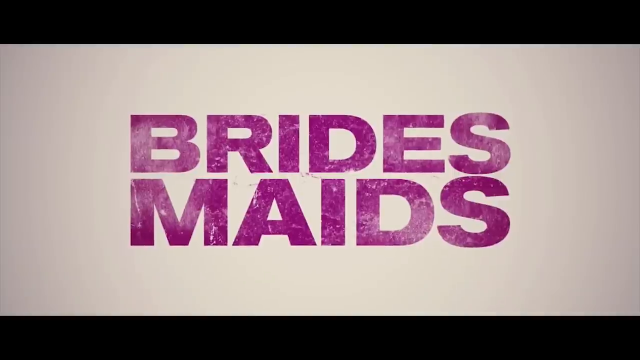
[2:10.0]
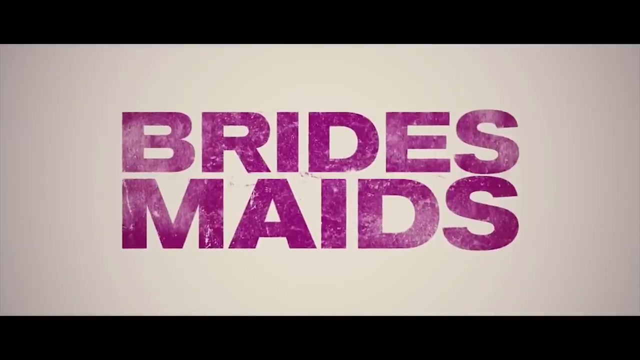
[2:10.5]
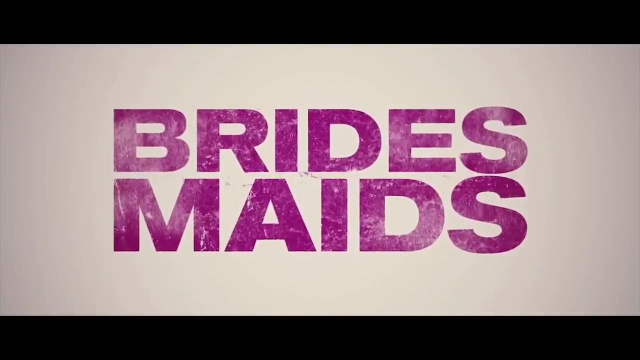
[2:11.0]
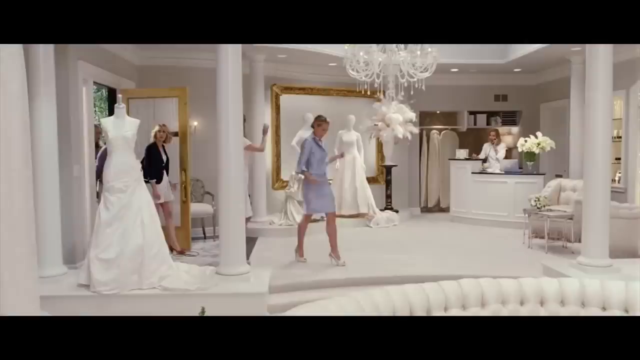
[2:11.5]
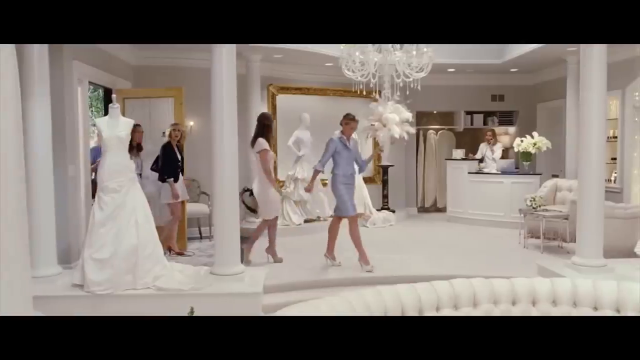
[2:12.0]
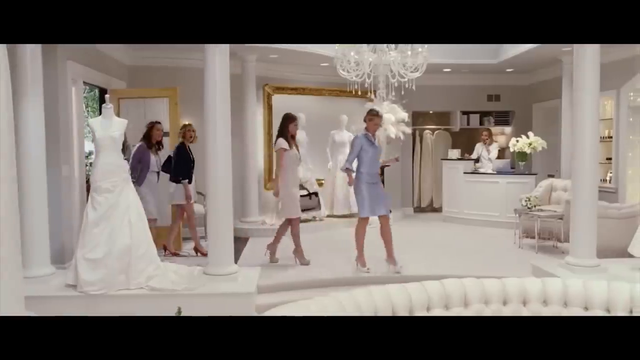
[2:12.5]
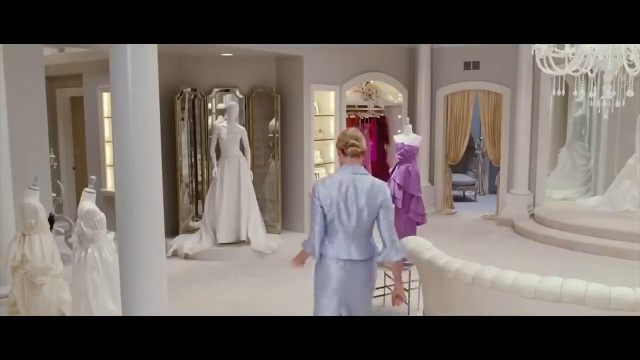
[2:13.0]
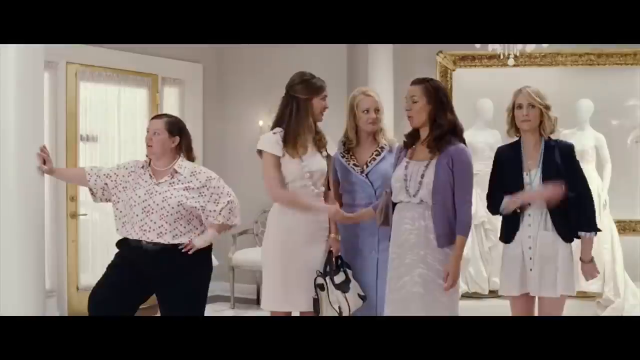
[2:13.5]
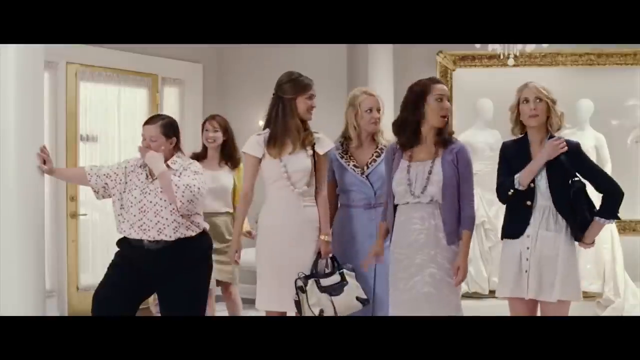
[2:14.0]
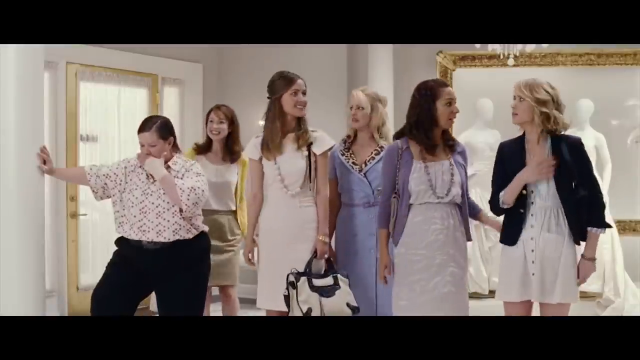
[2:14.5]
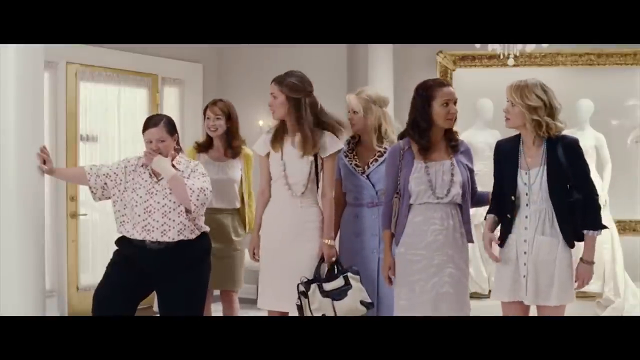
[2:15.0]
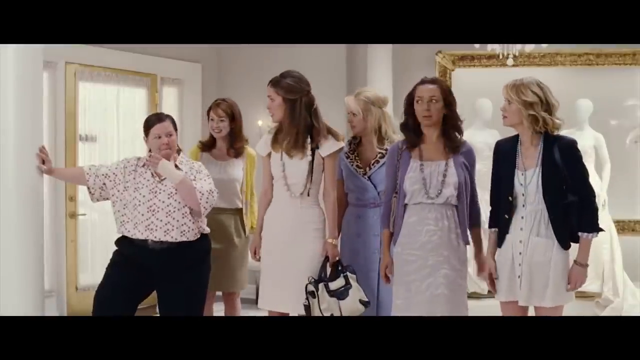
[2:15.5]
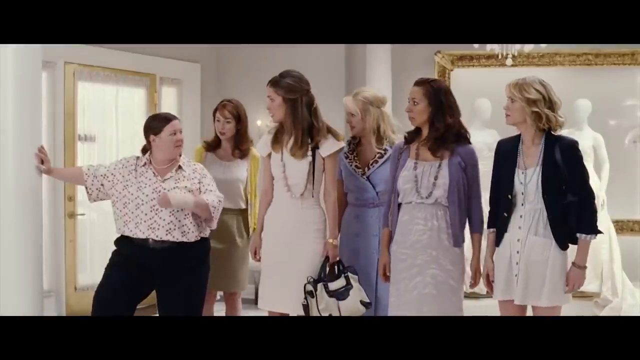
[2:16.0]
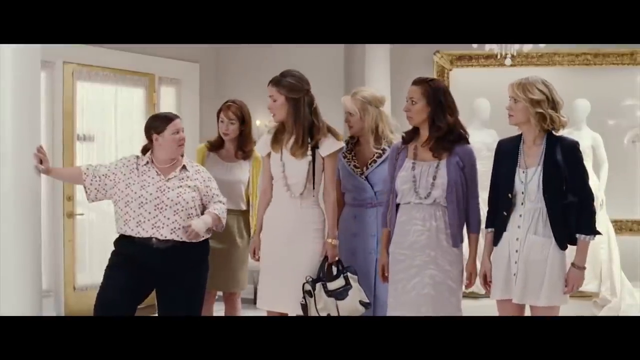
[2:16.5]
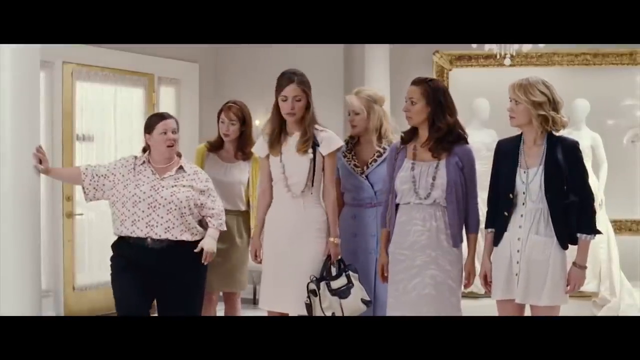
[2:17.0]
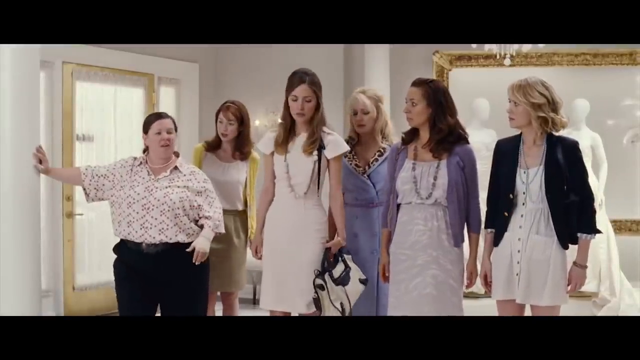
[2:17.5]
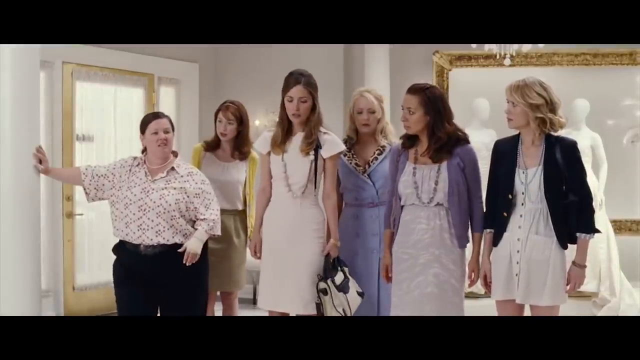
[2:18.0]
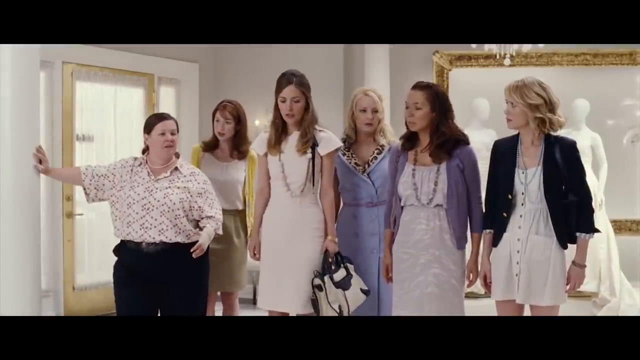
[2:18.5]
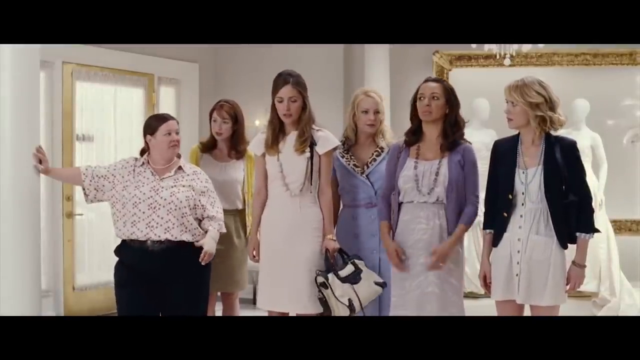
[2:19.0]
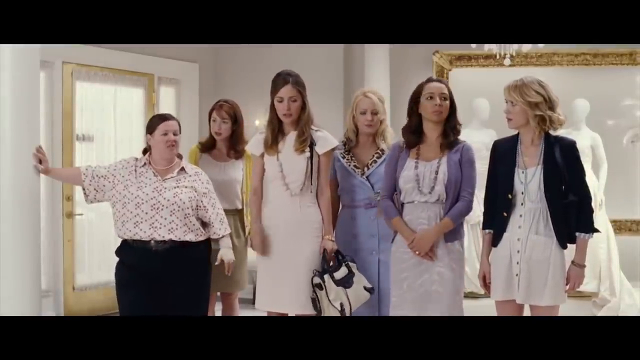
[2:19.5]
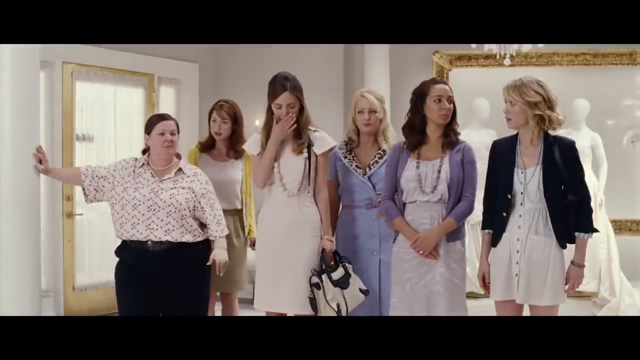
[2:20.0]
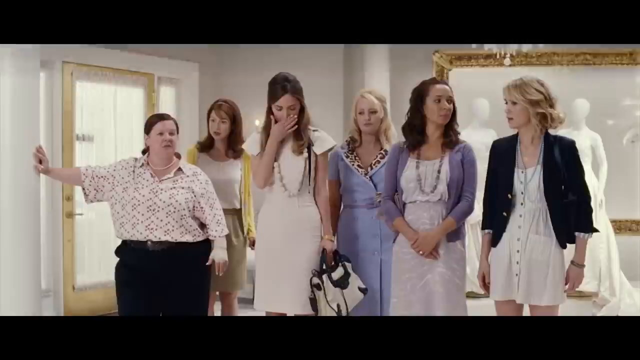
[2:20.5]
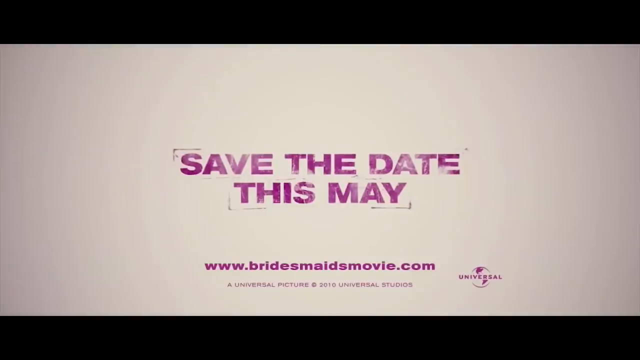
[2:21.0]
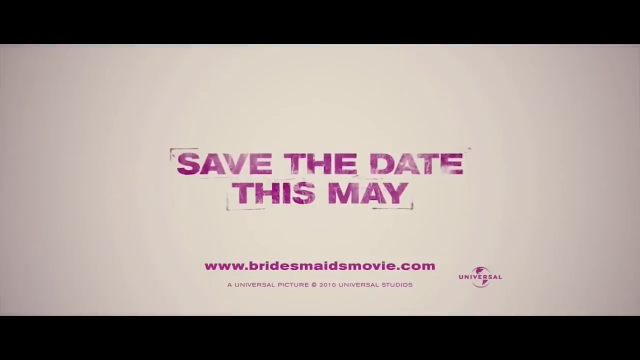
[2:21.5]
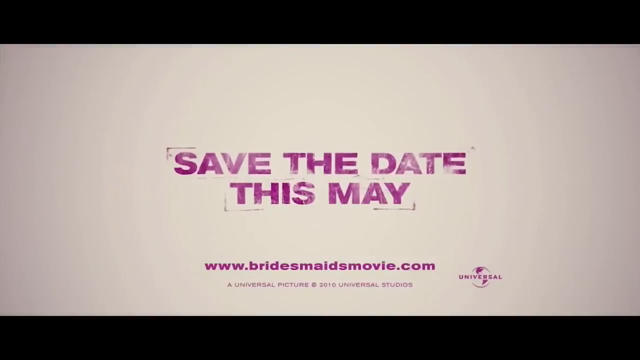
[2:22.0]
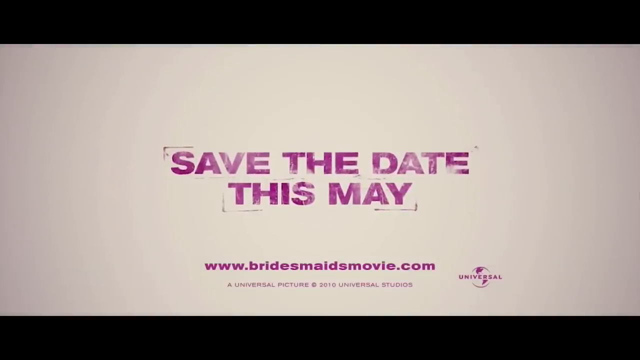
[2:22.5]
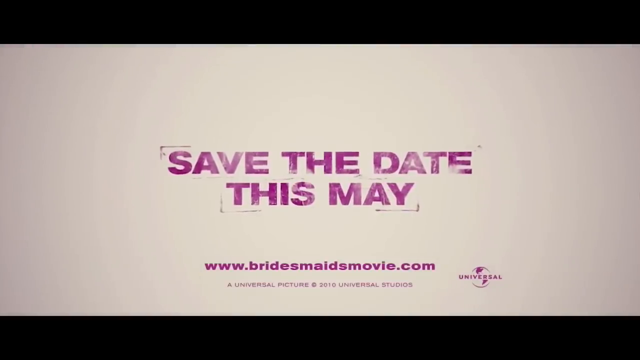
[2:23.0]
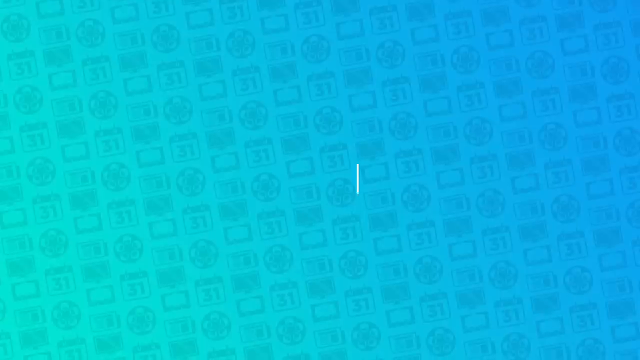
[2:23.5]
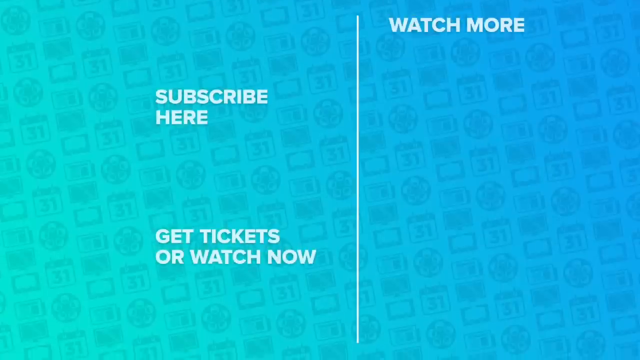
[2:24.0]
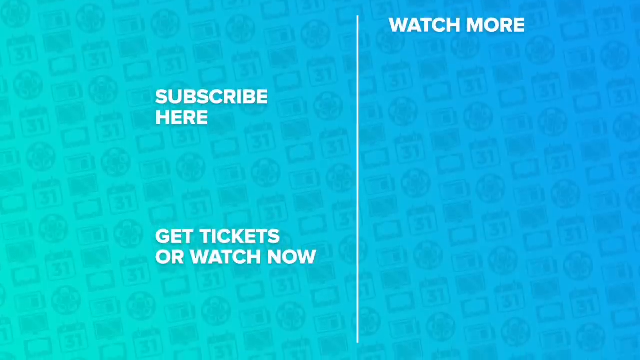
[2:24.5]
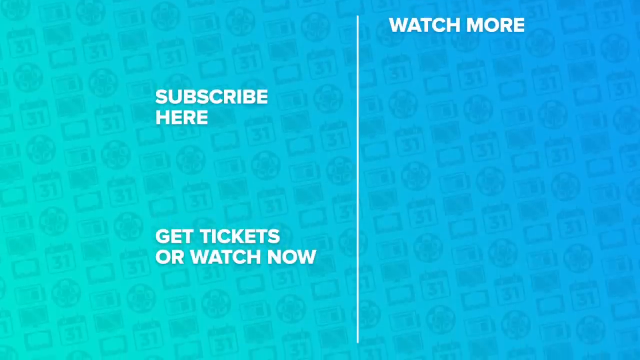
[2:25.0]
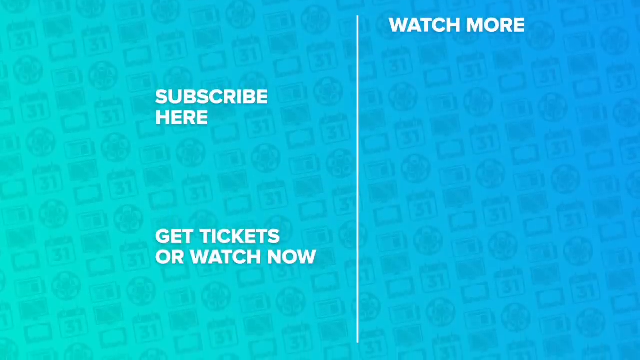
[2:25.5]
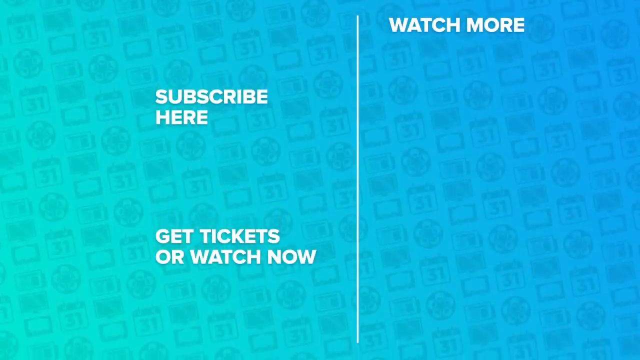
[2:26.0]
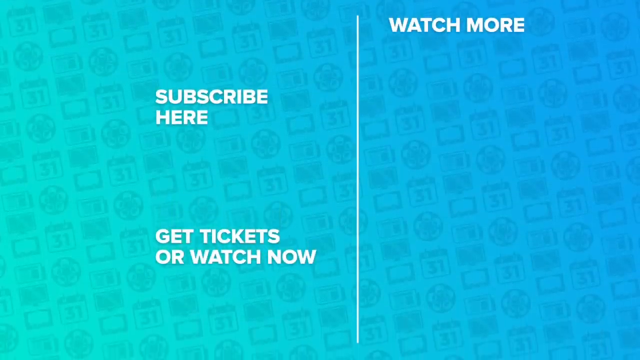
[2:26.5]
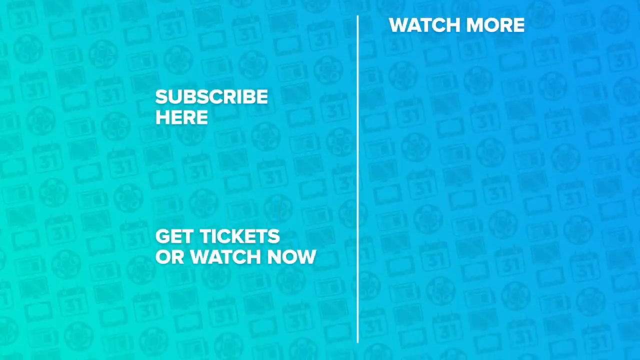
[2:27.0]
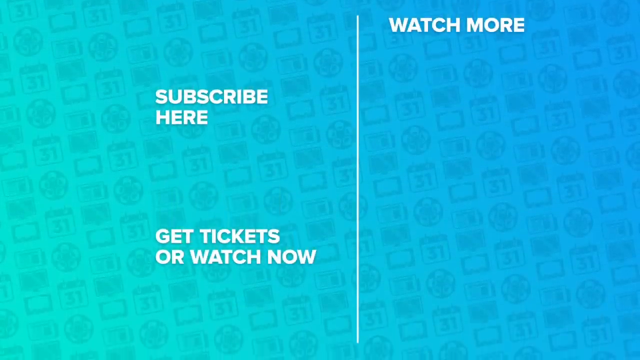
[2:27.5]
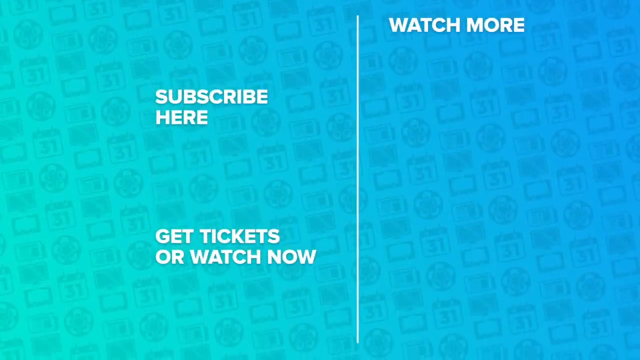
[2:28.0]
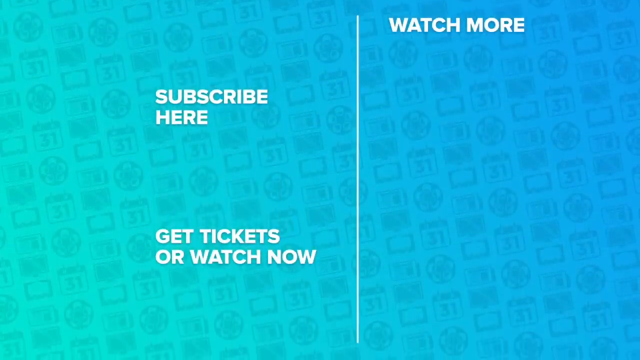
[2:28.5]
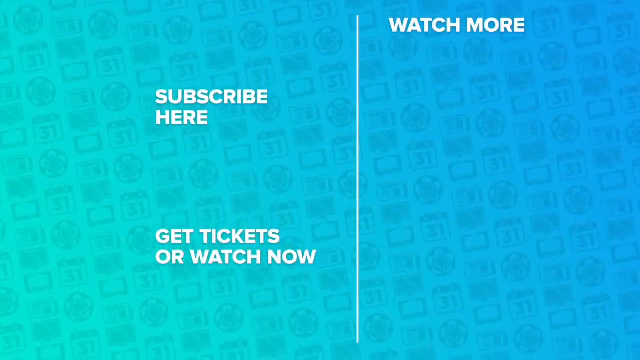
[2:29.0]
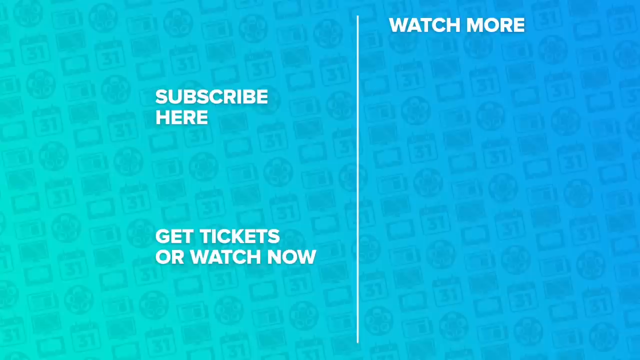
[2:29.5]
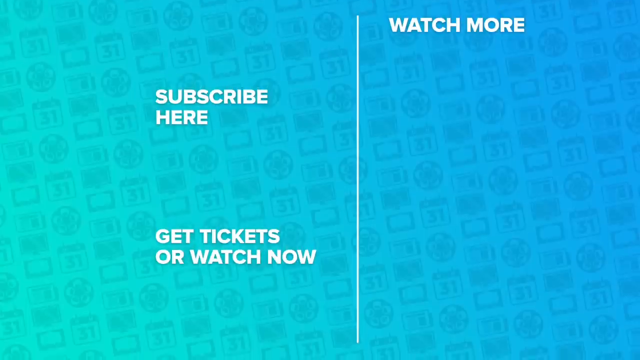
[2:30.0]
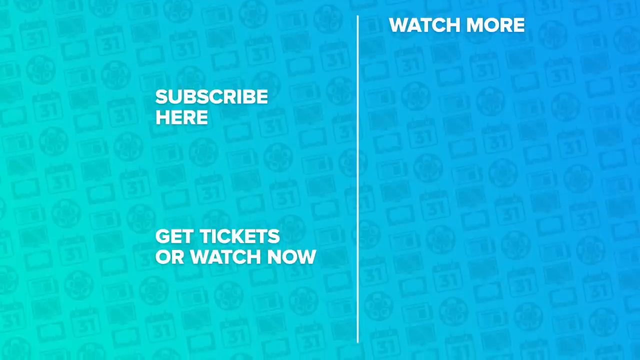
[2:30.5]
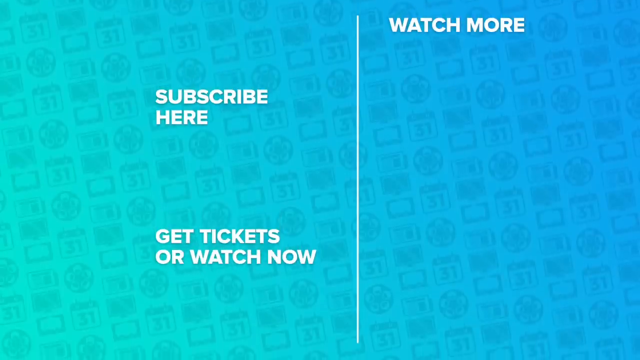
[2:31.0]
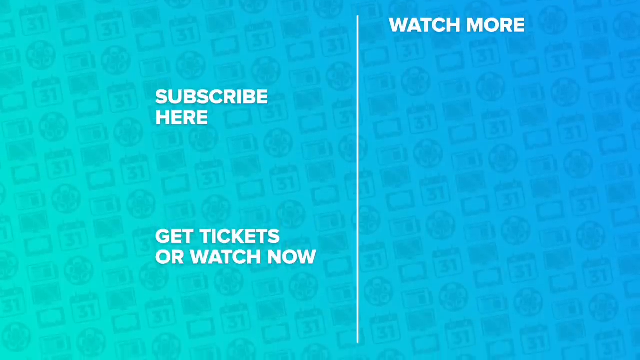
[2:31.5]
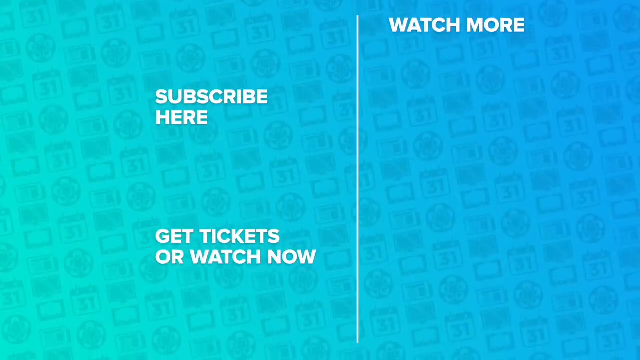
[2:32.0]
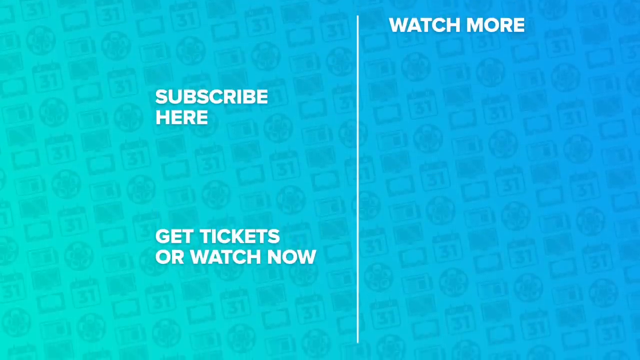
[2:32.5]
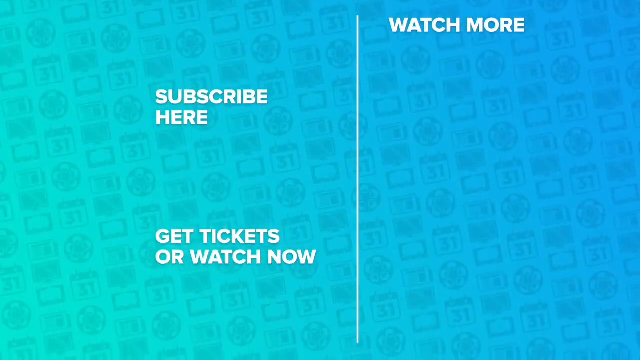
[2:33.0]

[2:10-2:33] The movie name "Bridesmaids" is on the screen. The scene changes to the women walking into a store, apparently where they would shop for and try on the wedding dress. They all stand in a line talking, and then they all look over at the woman standing on the left, as if she has just said something very insulting. Then they all stand around looking uncomfortable. The next screen reads "save this date this May," with "www.bridesmaidsmovie.com" below it and a Universal logo in the lower right corner. The video ends with a YouTube ending screen showing a "watch more" tab, a "subscribe here" button and, in the lower left, "get tickets or watch now."